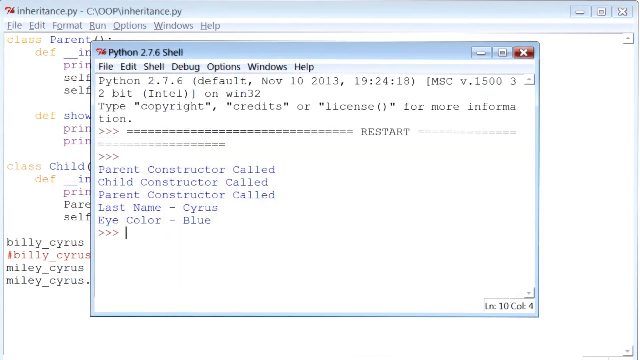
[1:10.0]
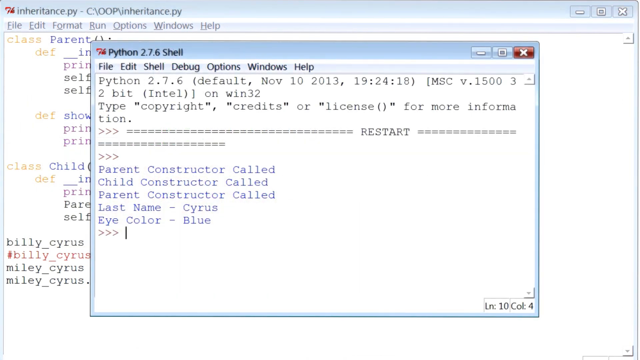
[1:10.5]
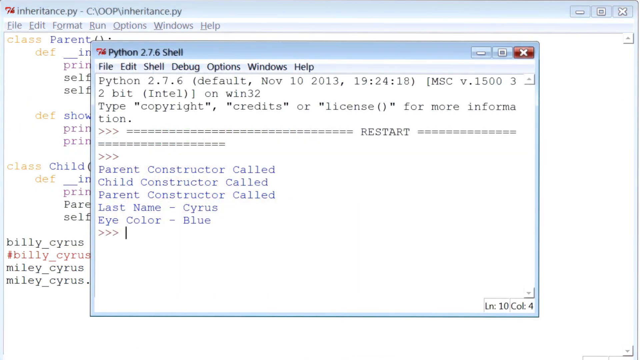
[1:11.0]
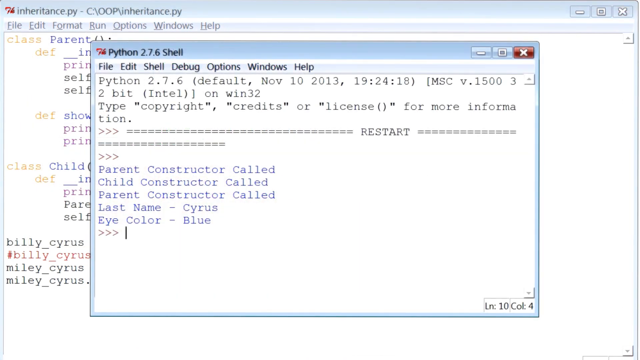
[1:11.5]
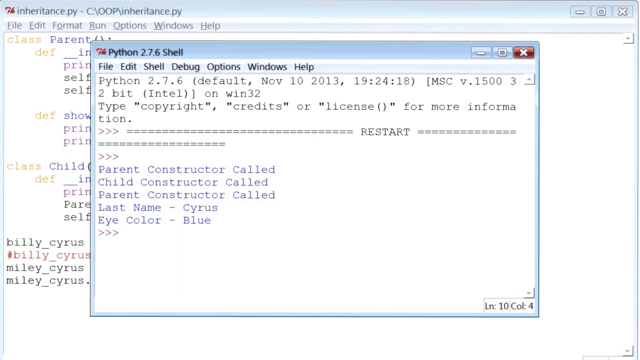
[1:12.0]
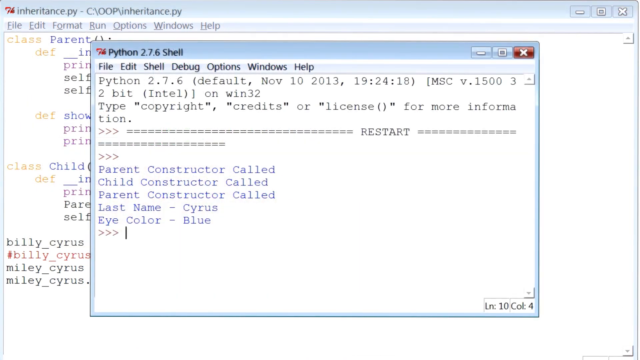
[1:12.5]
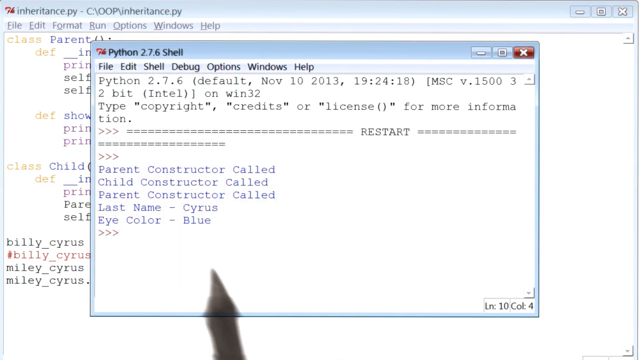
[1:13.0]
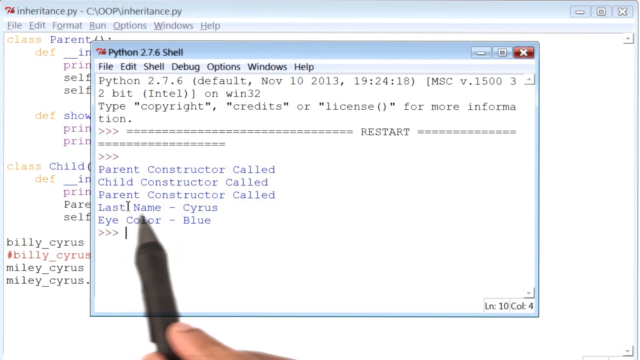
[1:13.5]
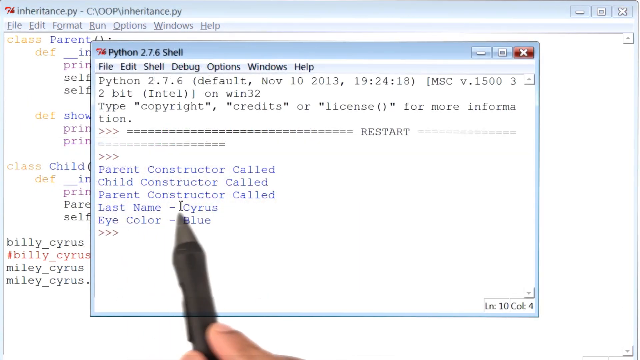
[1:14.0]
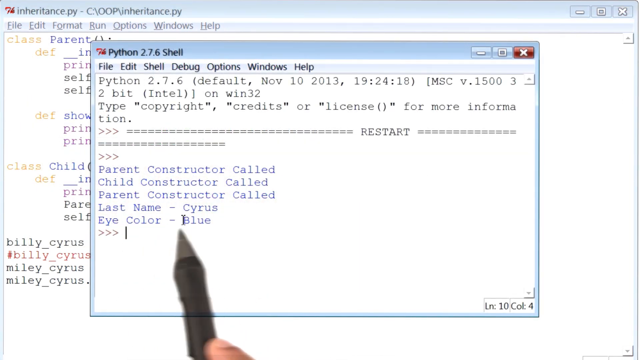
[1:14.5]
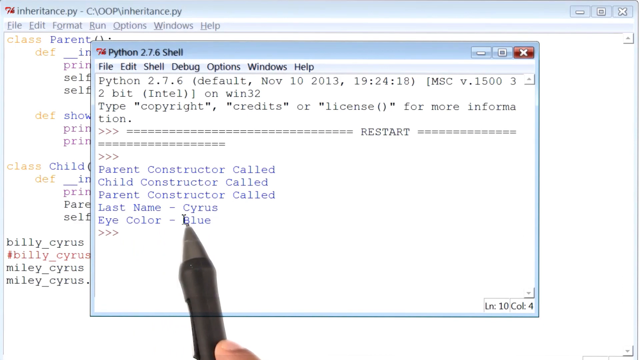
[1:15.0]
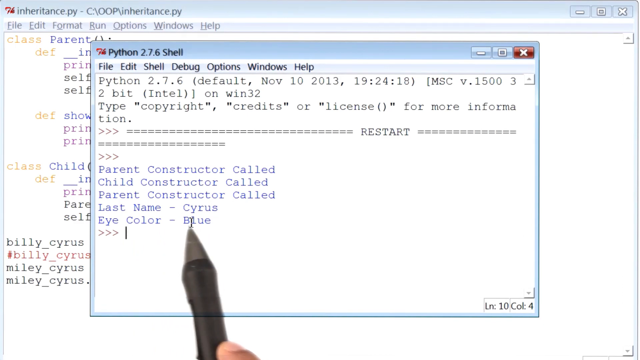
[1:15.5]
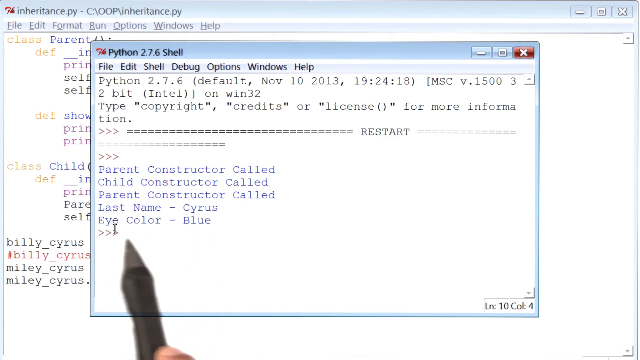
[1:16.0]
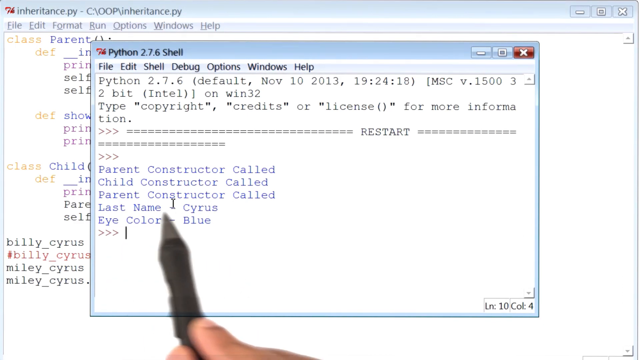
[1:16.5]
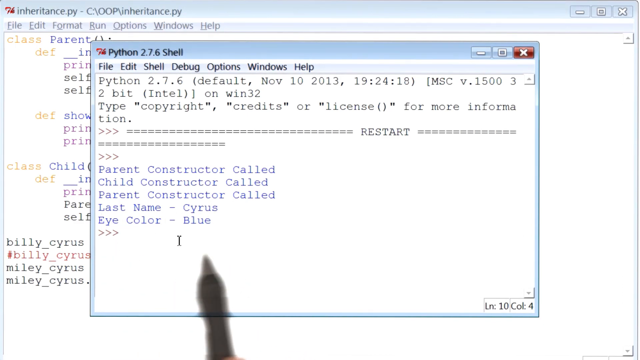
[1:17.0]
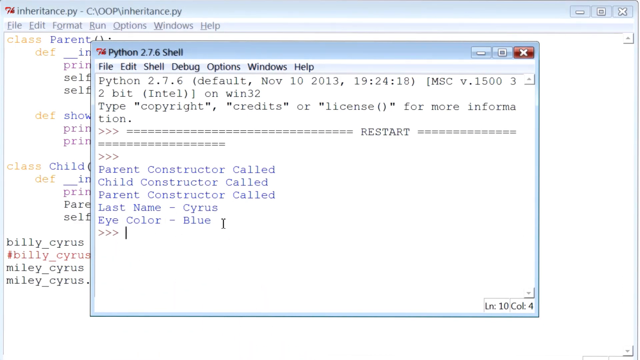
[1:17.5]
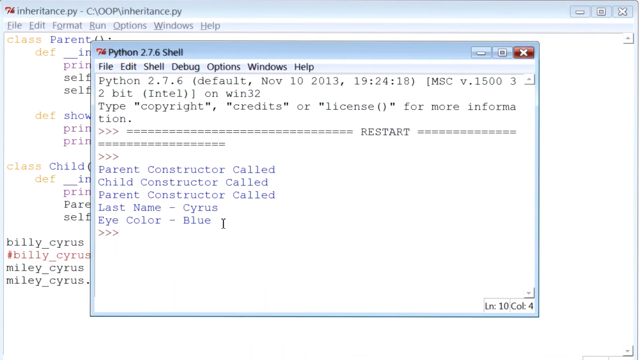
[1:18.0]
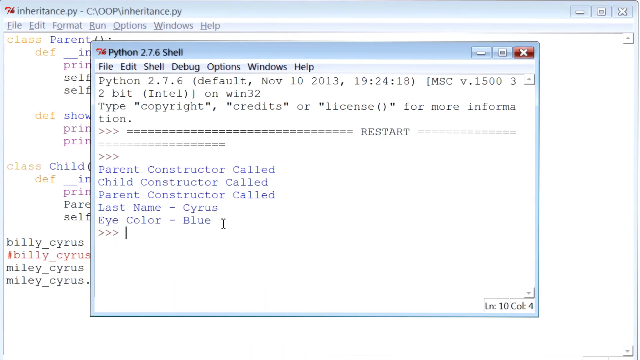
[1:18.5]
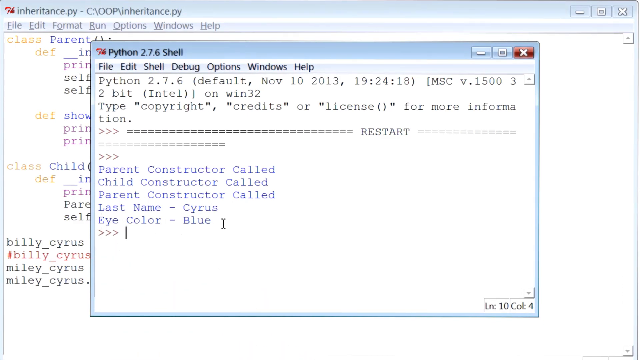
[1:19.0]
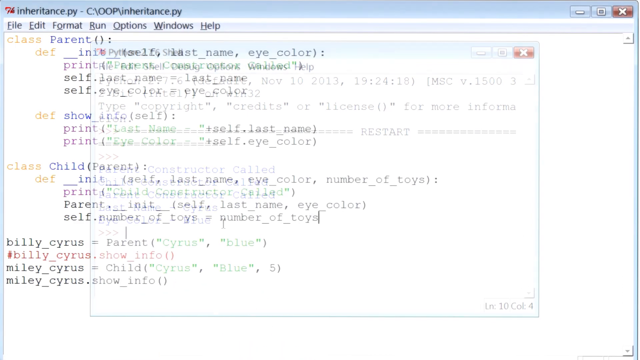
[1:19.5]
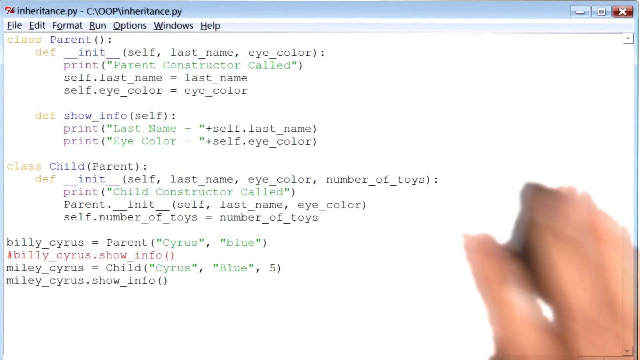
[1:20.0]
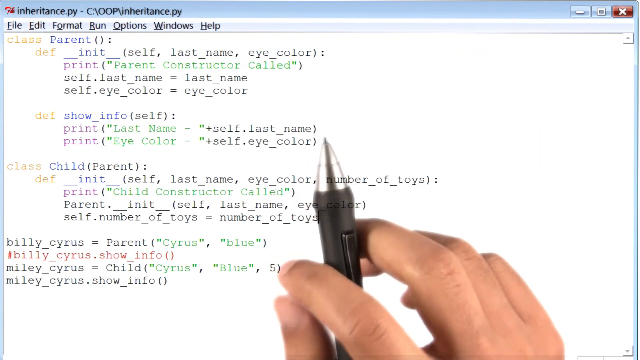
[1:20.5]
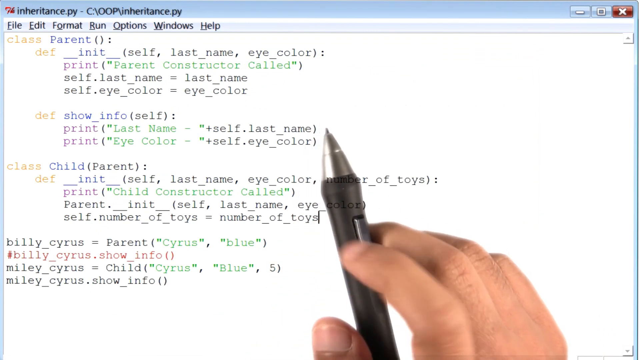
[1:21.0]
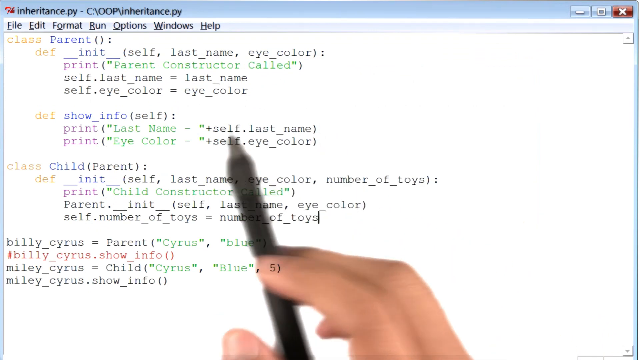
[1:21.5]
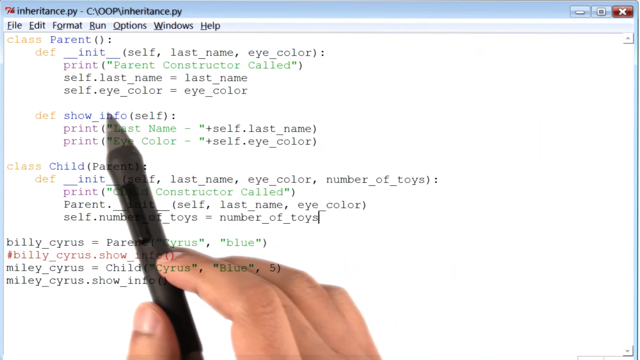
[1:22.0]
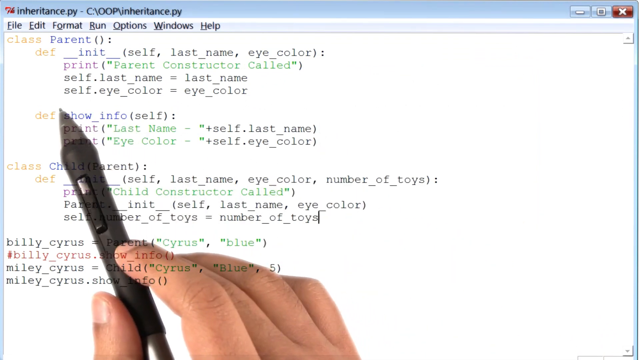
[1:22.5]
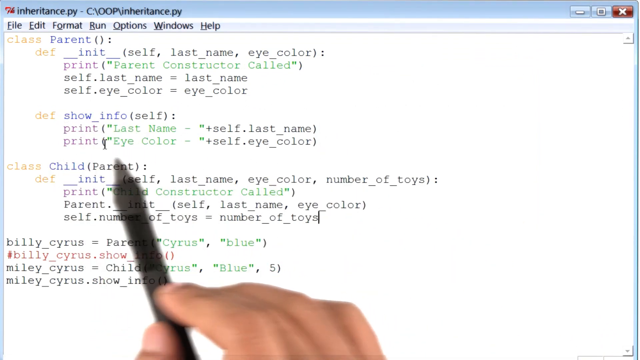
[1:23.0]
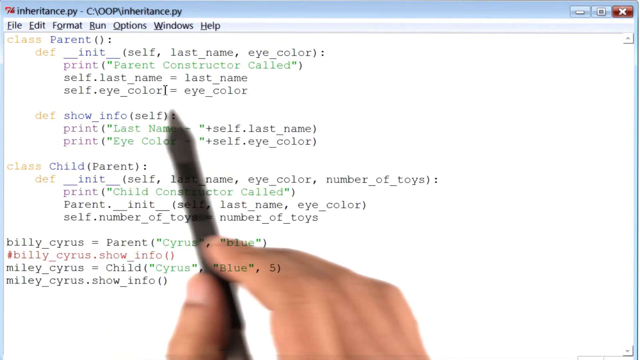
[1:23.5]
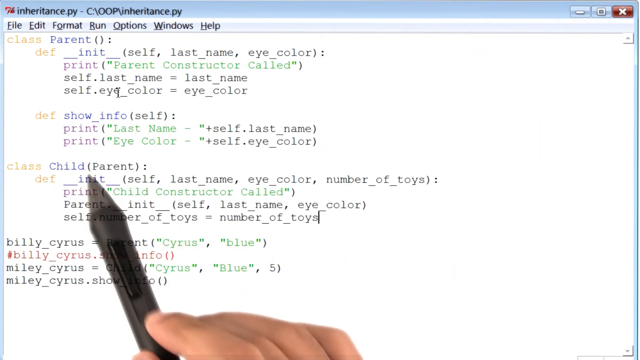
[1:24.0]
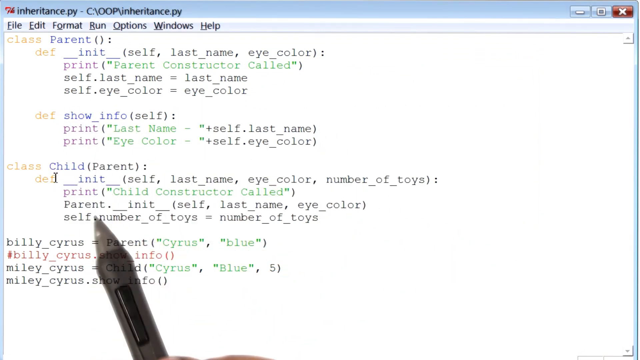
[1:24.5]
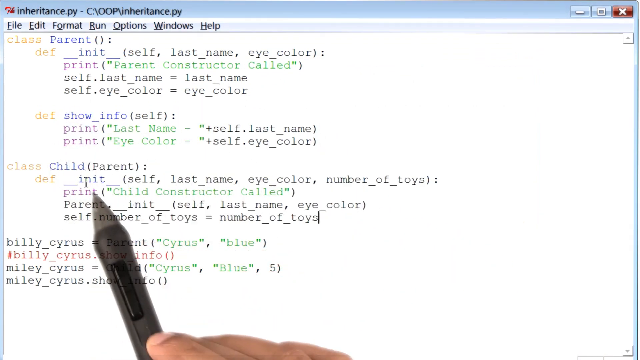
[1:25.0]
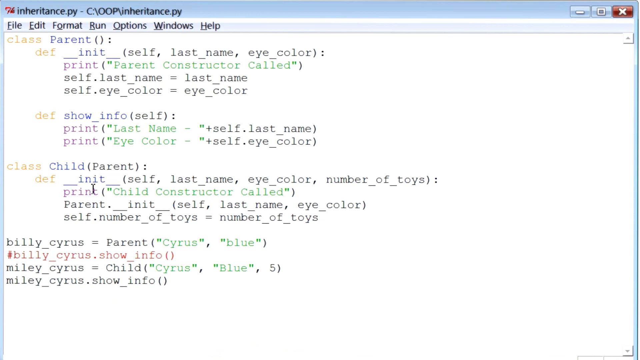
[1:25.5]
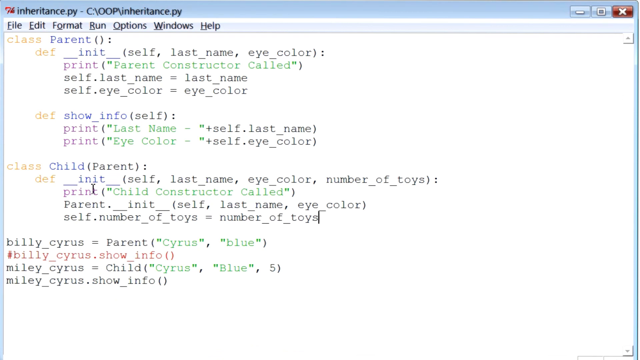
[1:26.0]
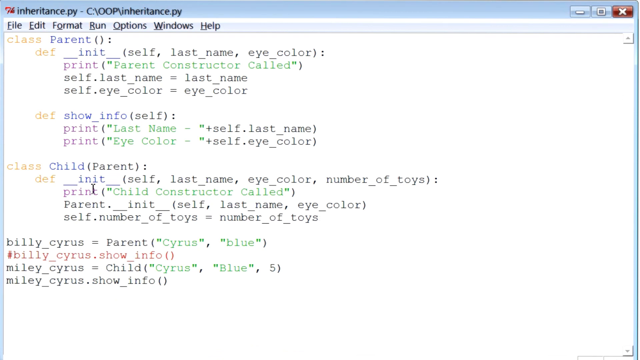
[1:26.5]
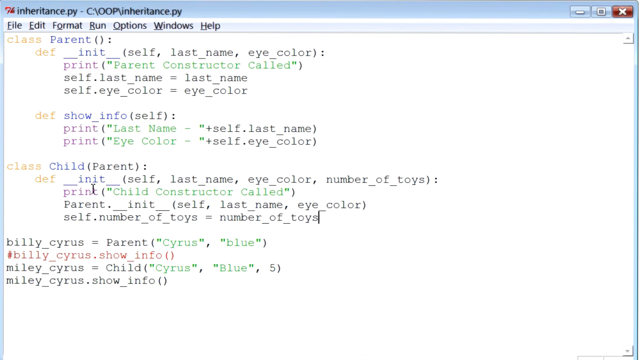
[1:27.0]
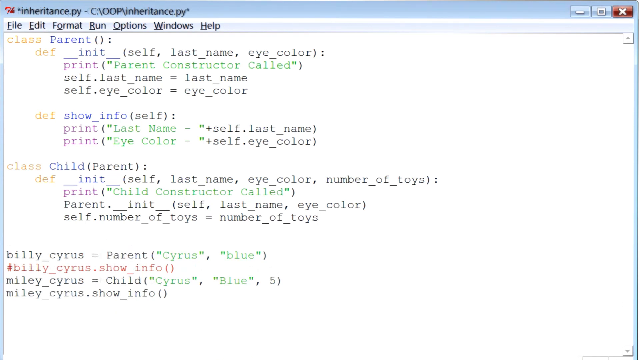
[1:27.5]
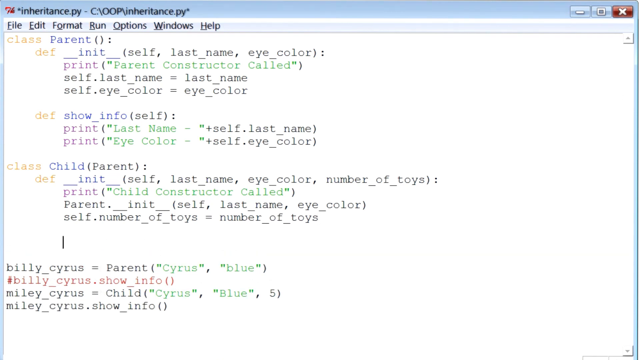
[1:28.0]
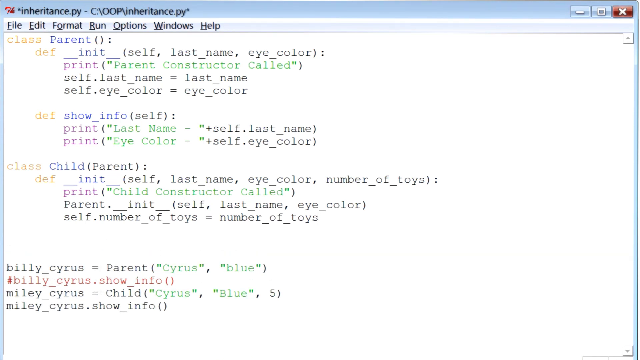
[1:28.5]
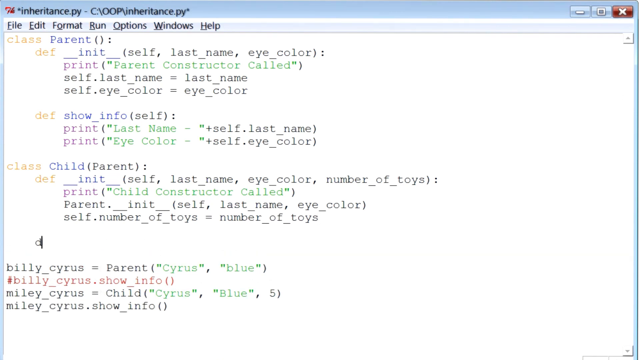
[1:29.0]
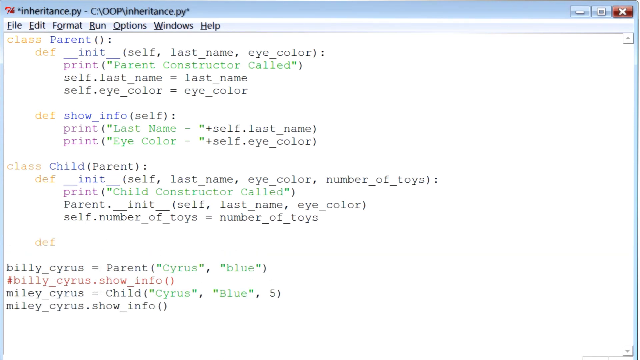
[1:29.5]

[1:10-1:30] Someone is probably teaching coding in a document called "inheritance py", which lists a parent name, last name, child's name and eye color, with an example of Billy Cyrus and Miley Cyrus at the bottom. A stylus points things out and circles things. The person clicks on file and opens the Python 2.7.6 shell, which shows "Python", "default November 10, 2013", "copyright", "credits", "license", "parent constructor called", "child constructor called", "parent constructor called", "last name Cyrus" and "eye color blue". The stylus circles and points to things, including the child's name.